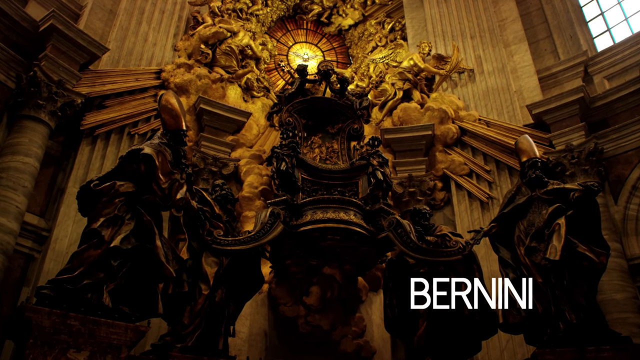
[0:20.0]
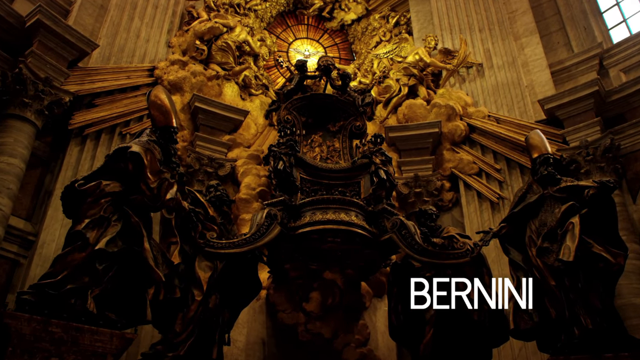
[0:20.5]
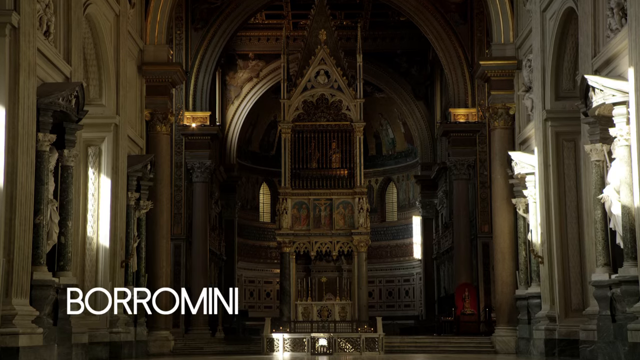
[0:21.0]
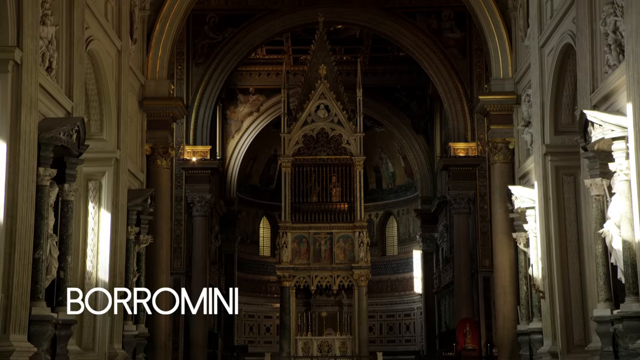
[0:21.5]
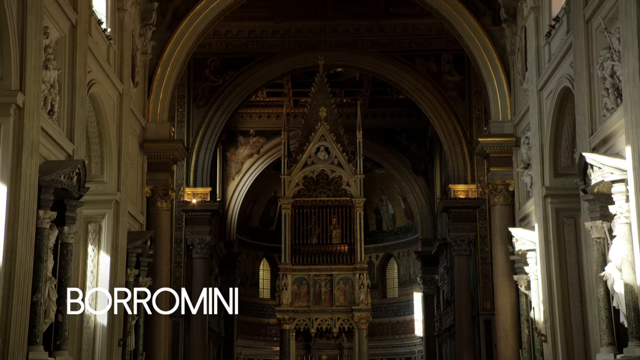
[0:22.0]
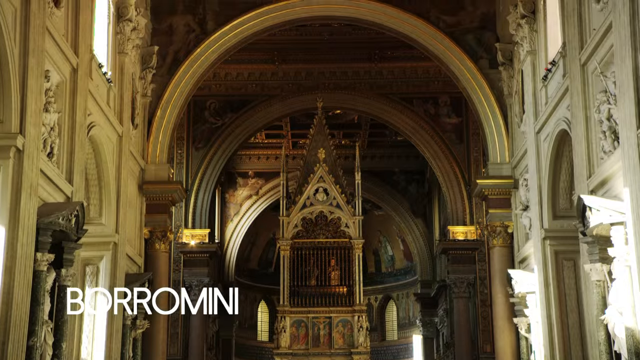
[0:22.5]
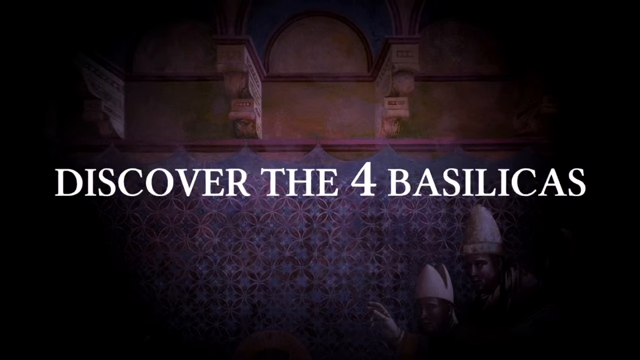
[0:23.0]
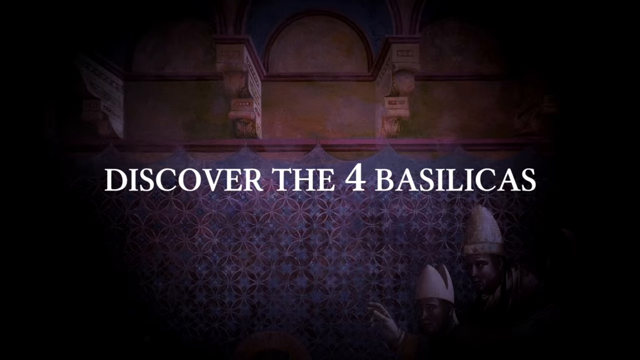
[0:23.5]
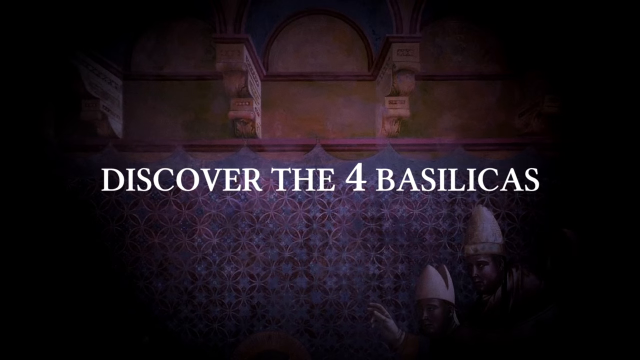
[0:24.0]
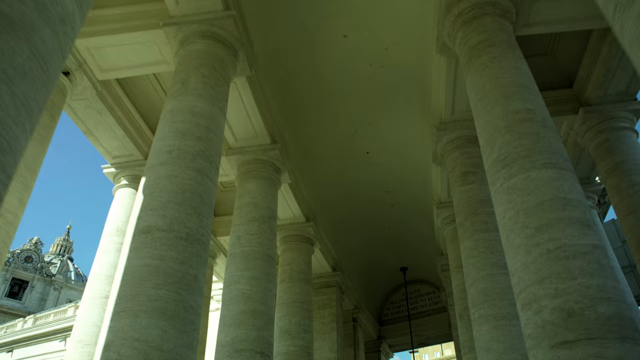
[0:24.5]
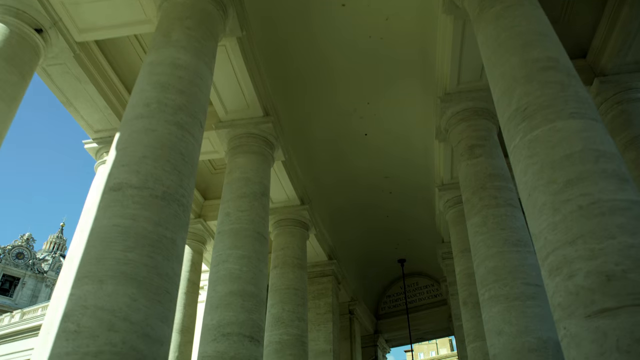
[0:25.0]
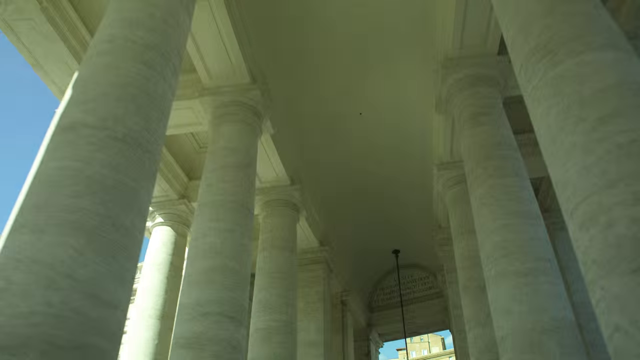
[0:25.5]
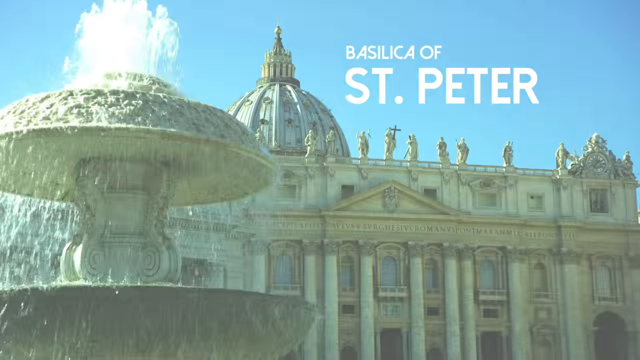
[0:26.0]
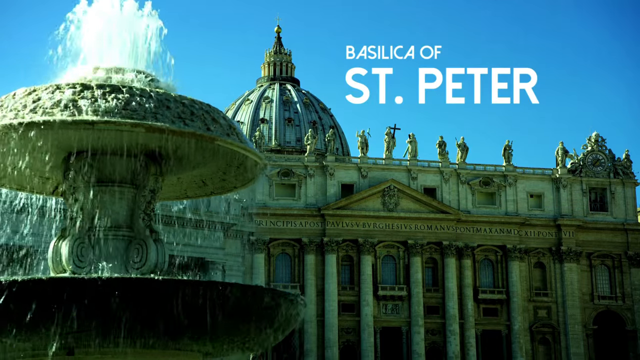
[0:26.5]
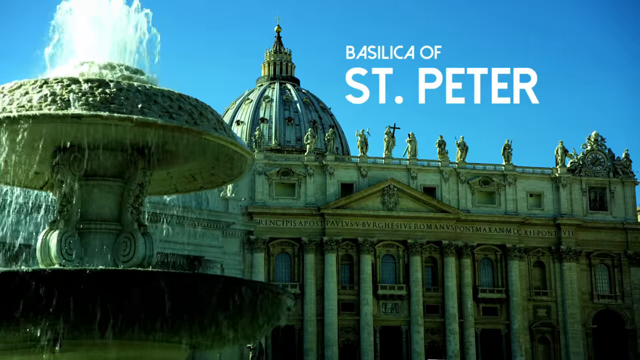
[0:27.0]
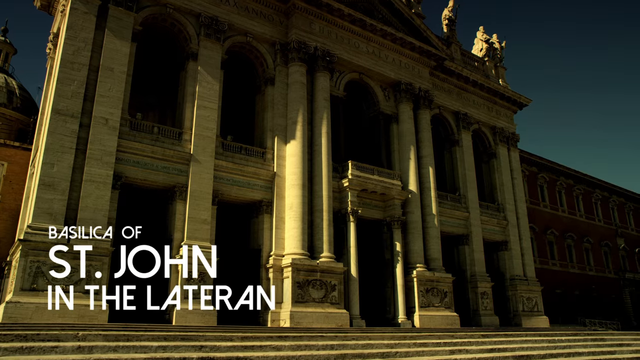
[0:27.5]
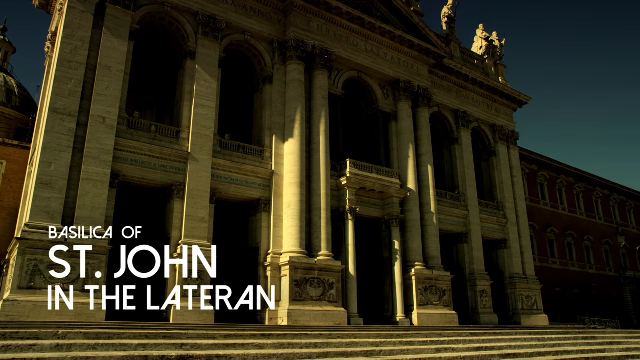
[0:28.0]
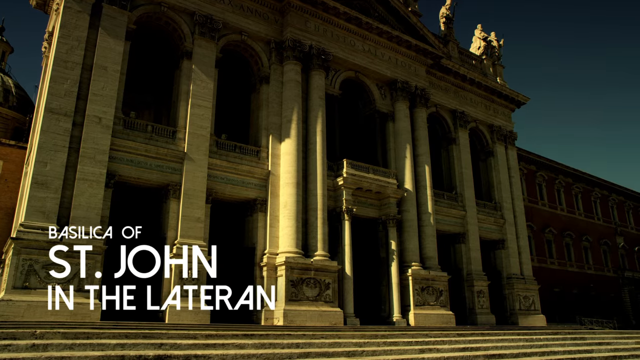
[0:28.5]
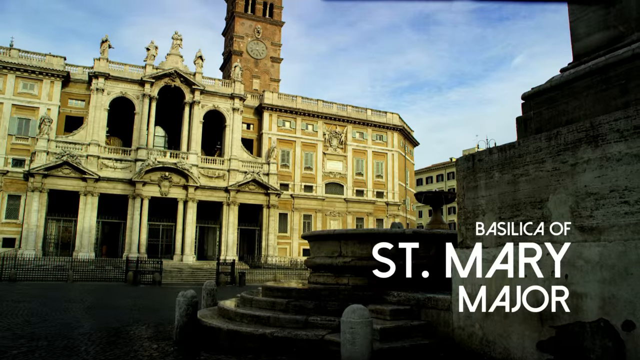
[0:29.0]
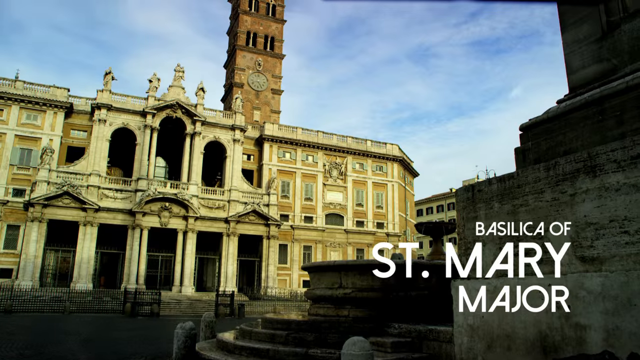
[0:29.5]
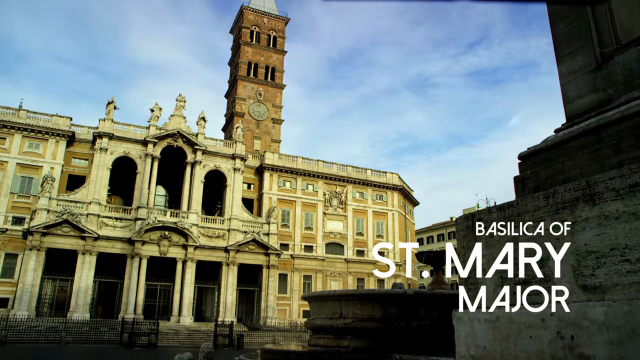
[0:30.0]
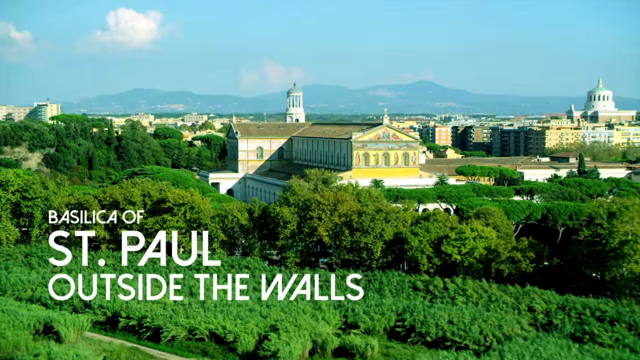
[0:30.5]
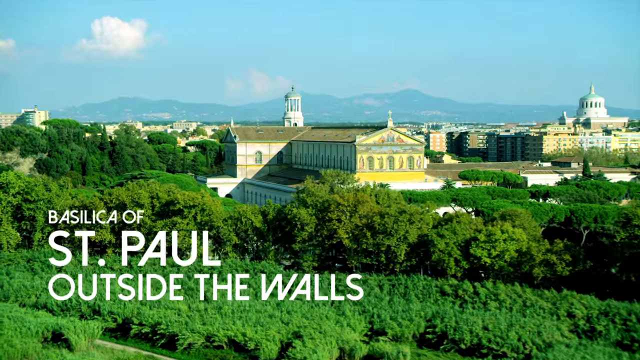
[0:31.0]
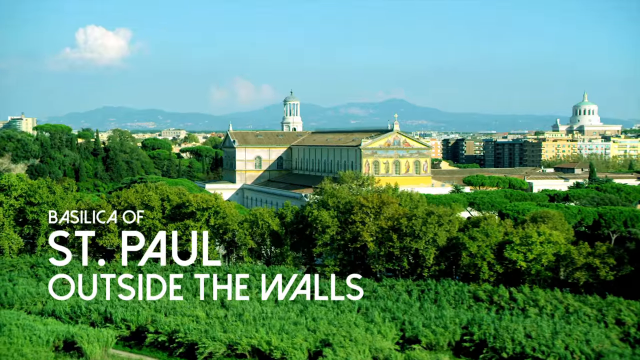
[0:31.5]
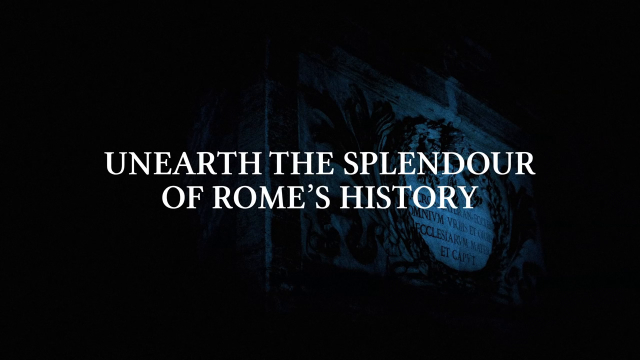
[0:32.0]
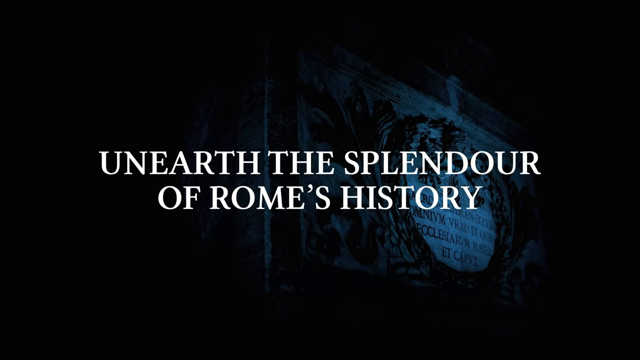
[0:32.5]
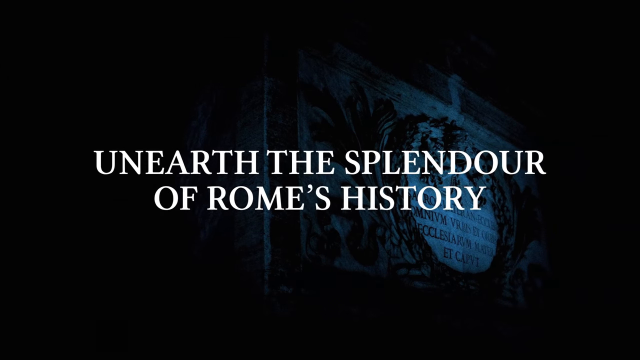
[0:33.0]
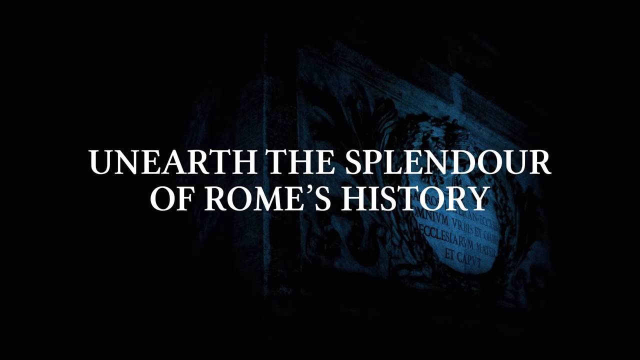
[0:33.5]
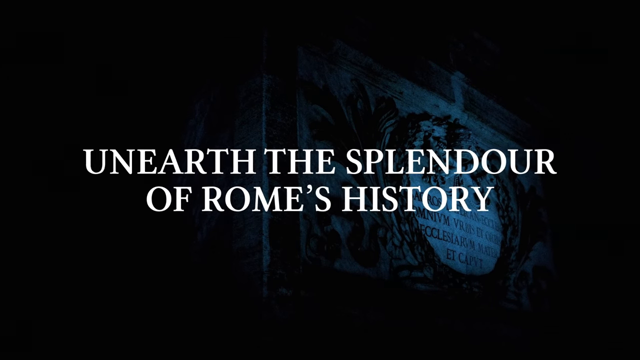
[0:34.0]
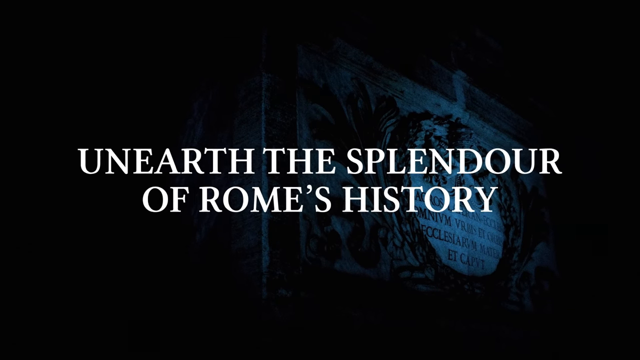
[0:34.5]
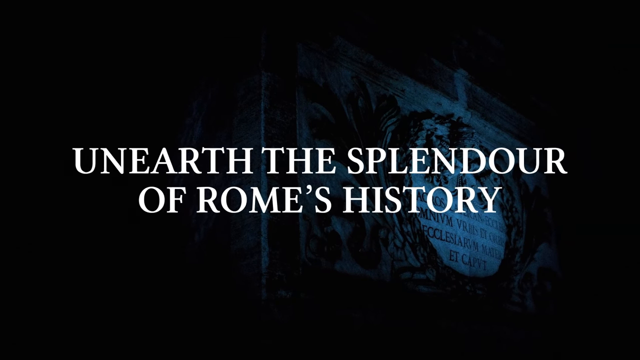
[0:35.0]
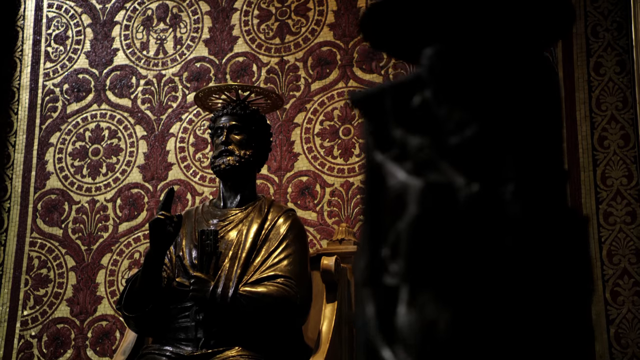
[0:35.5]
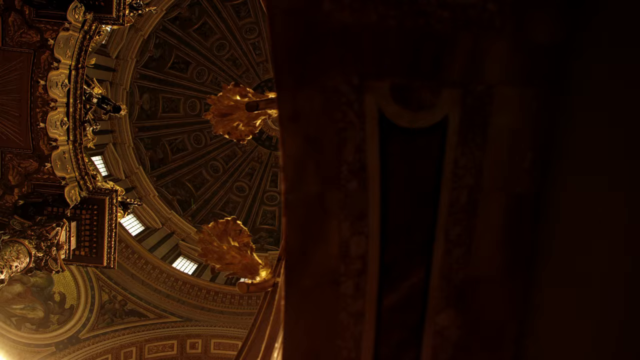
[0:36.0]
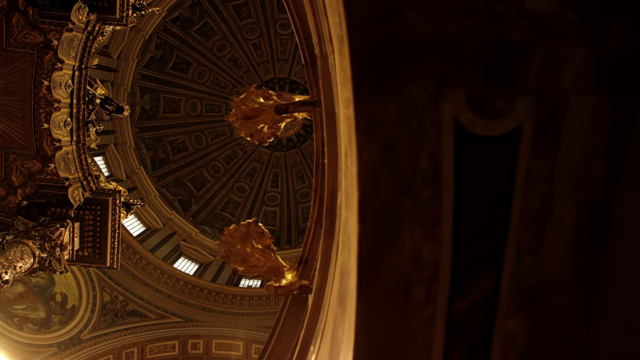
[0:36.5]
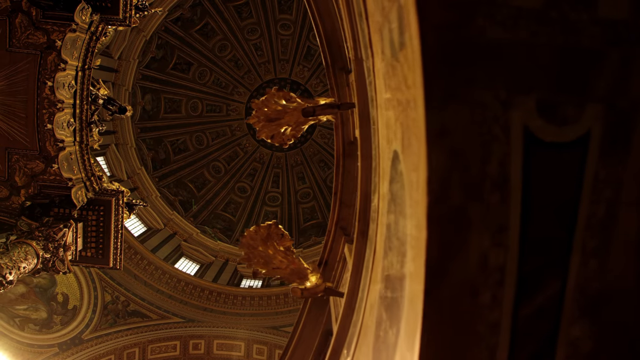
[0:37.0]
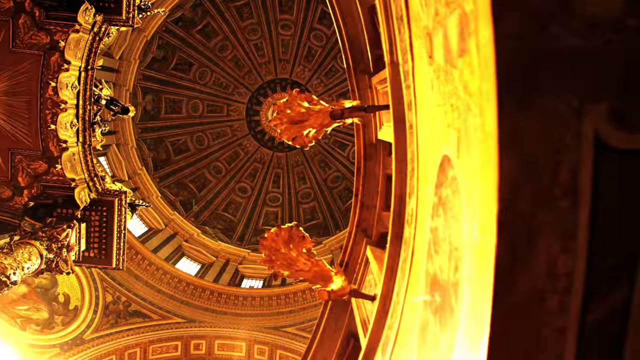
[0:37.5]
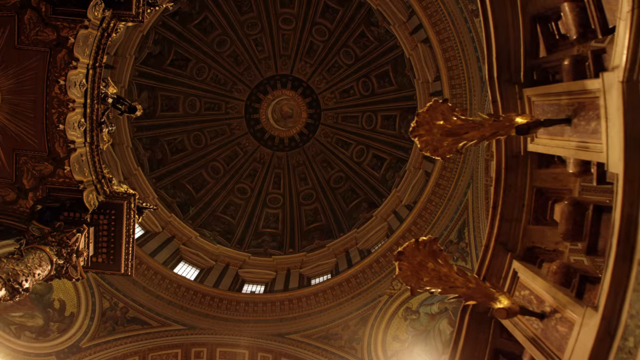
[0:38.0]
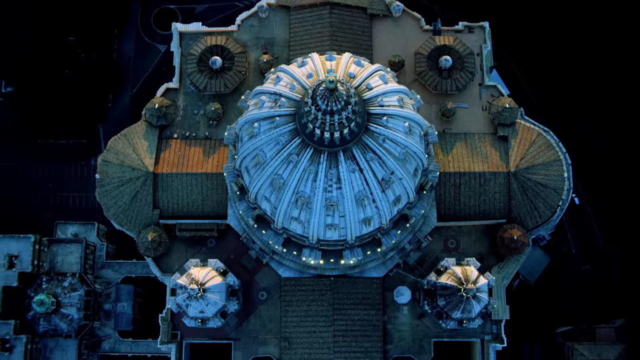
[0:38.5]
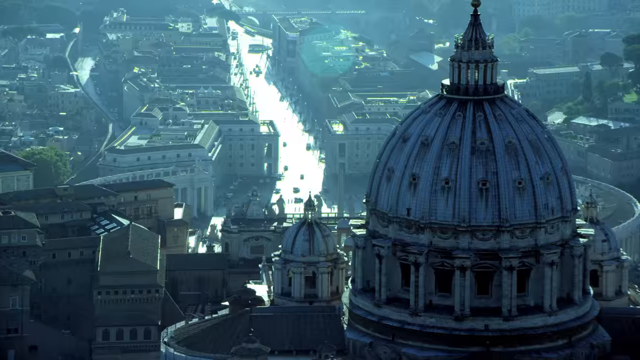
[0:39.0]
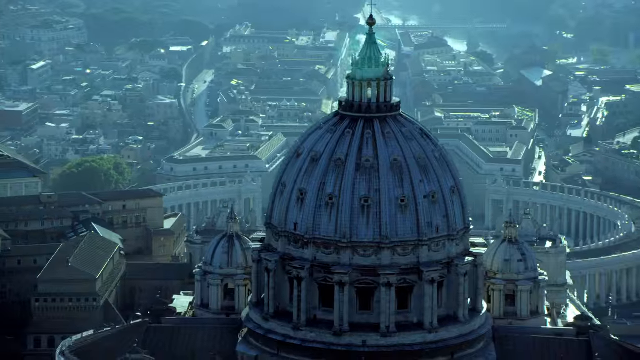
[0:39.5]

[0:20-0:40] Borromini is another of the artists or architects featured in the film. The interior of a church with flying buttresses and vaulted ceilings appears, and the camera pans upward. The scene changes to text that says "discover the four basilicas," followed by the exterior of St. Peter's Basilica, then the exterior of St. John in the Lateran, third St. Mary Major, and fourth St. Paul outside the walls. The scene changes again to text that says "unearth the splendor of Rome's history," with Roman statues and a Romanesque dome seen from the inside, its ceiling covered with a lot of carvings. An outside bird's-eye view follows of a basilica in Rome with an outer ring; it looks like St. Peter's Basilica, though this is uncertain.